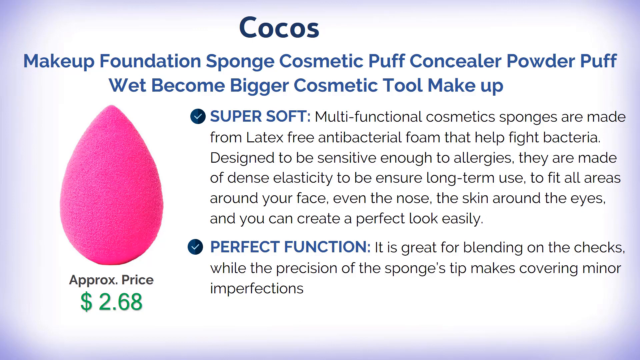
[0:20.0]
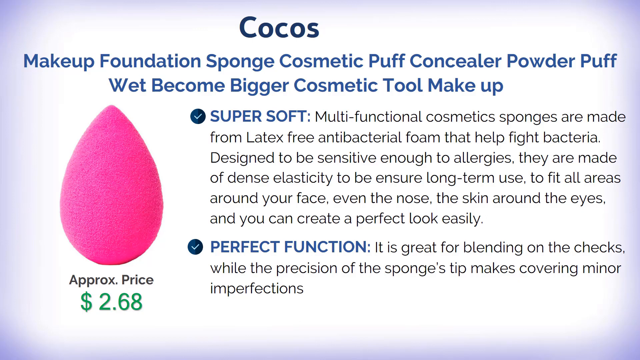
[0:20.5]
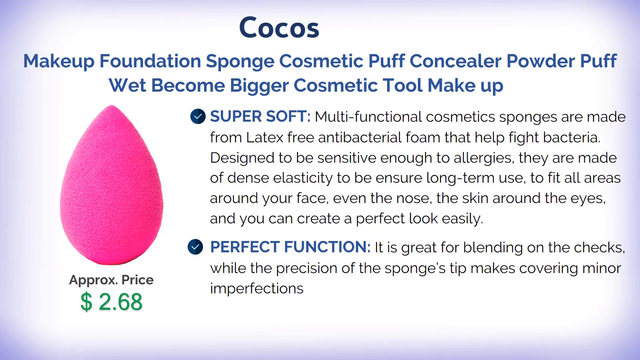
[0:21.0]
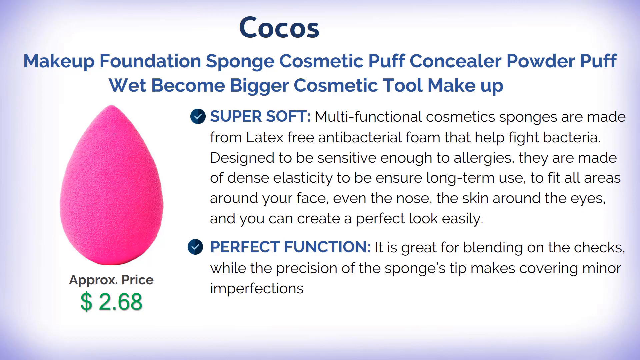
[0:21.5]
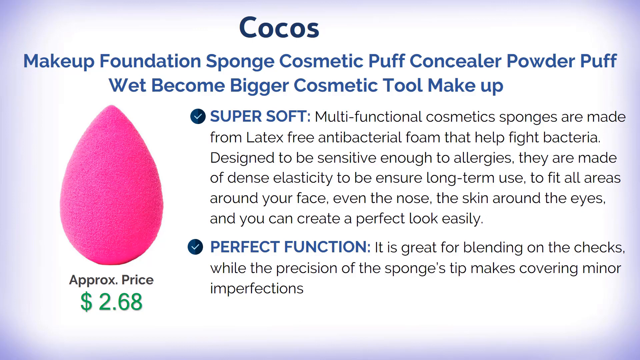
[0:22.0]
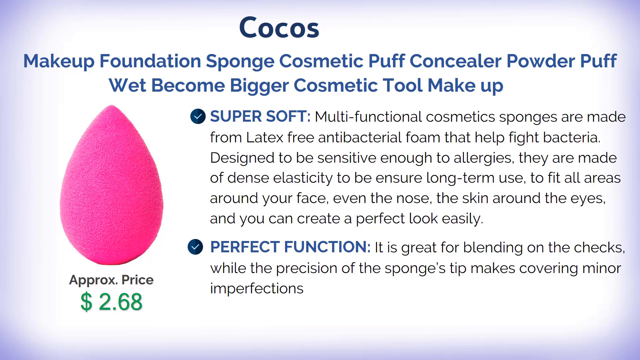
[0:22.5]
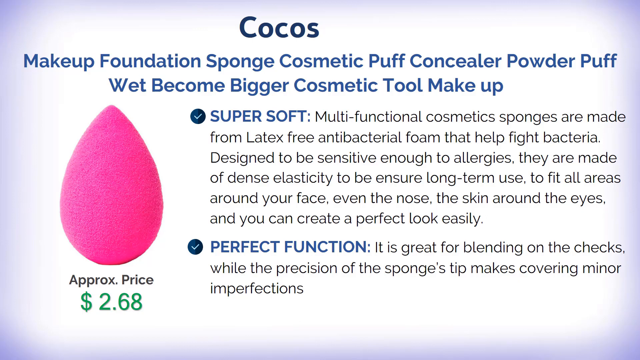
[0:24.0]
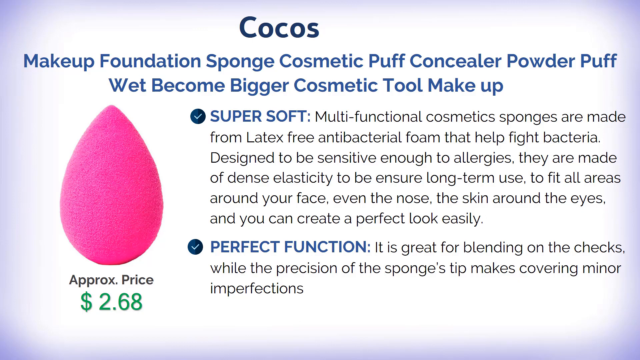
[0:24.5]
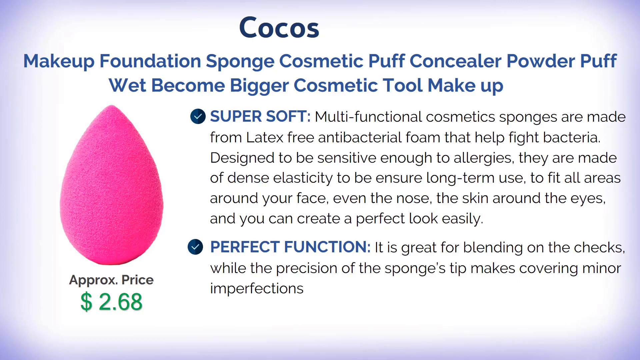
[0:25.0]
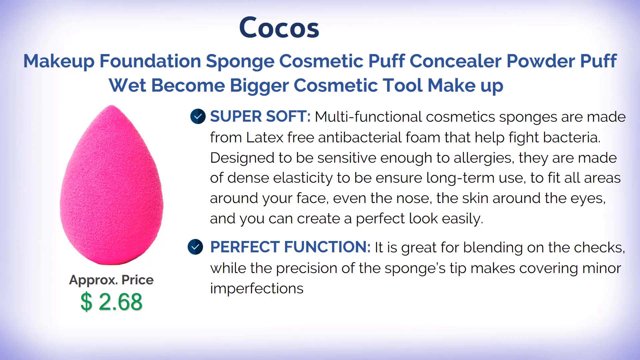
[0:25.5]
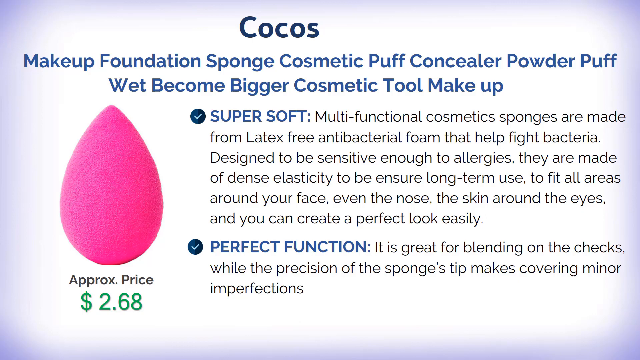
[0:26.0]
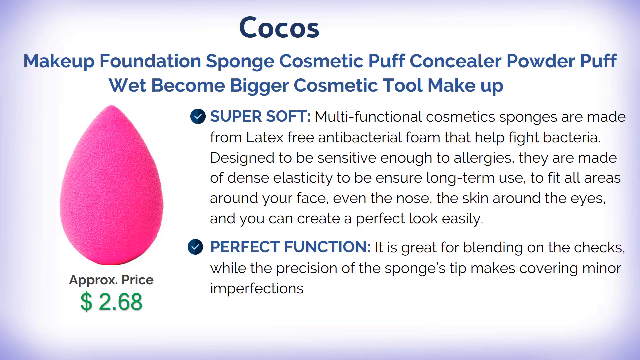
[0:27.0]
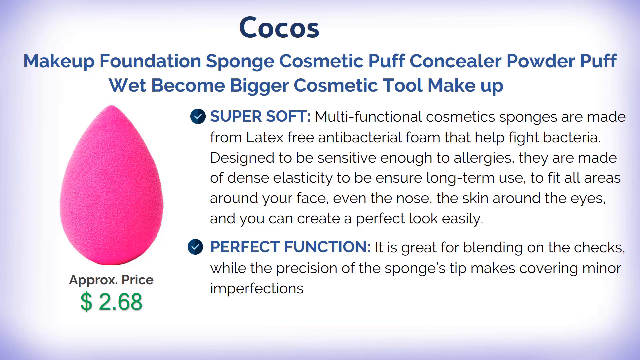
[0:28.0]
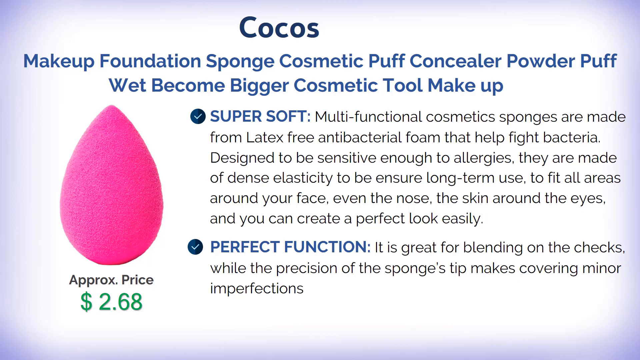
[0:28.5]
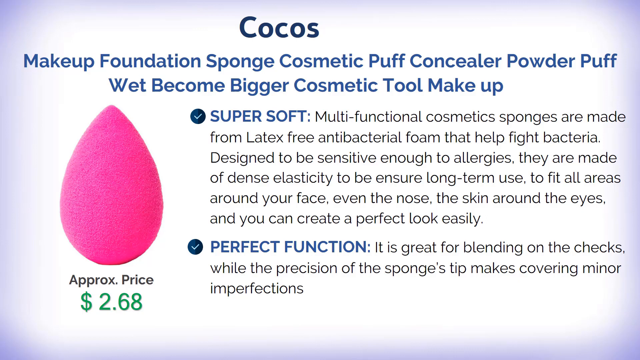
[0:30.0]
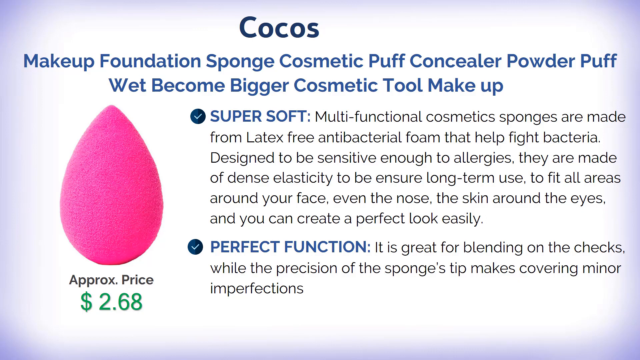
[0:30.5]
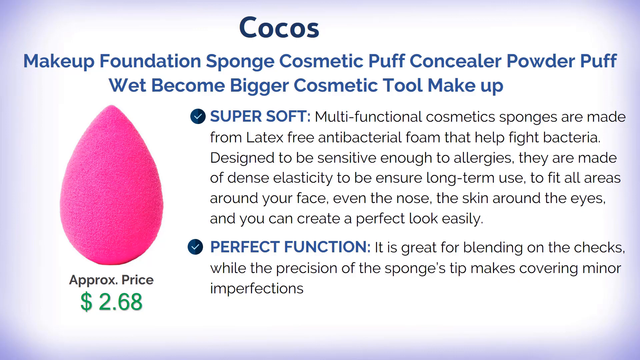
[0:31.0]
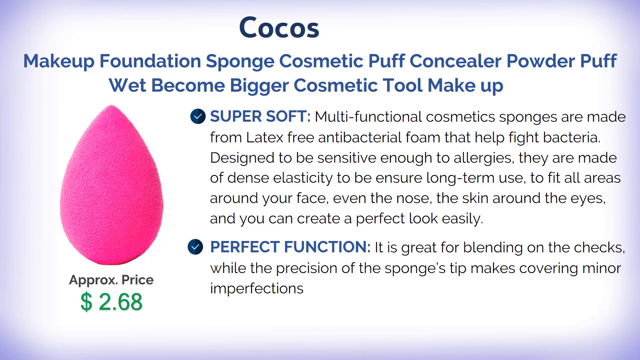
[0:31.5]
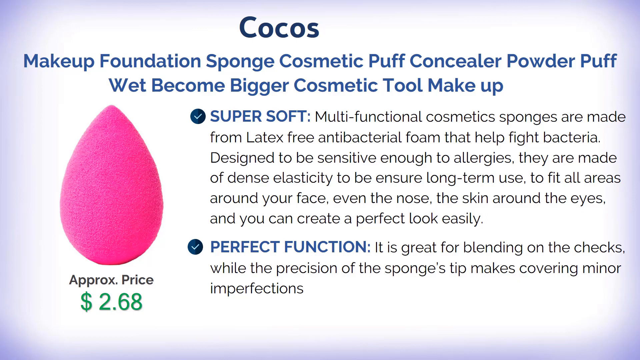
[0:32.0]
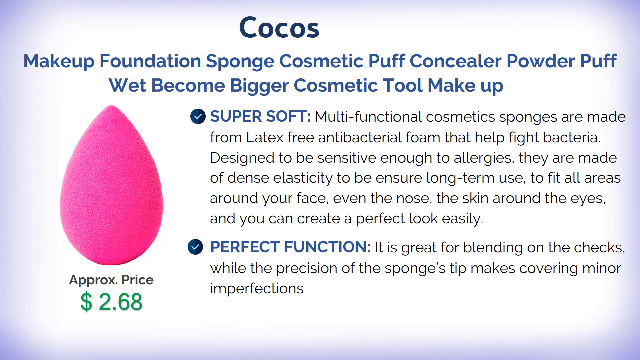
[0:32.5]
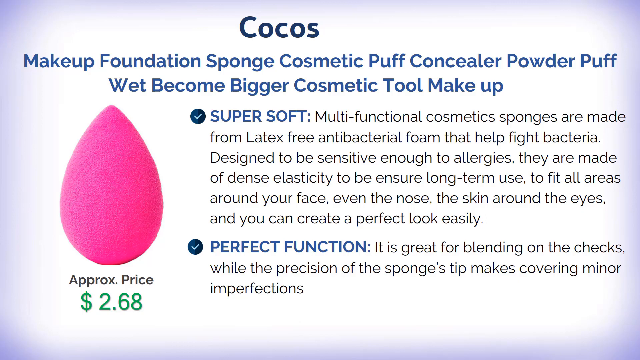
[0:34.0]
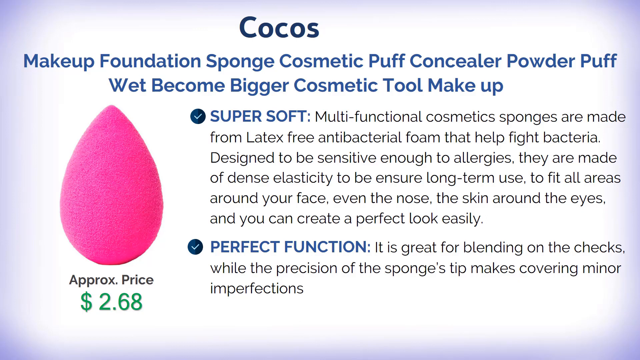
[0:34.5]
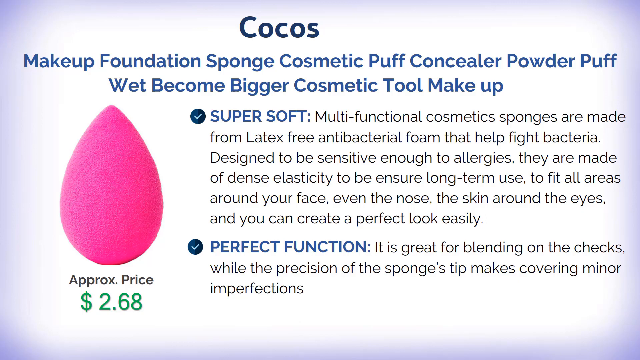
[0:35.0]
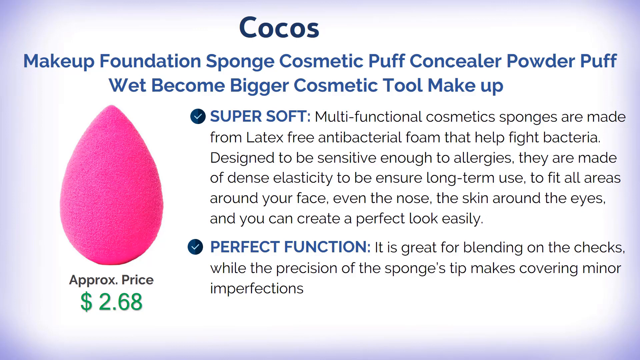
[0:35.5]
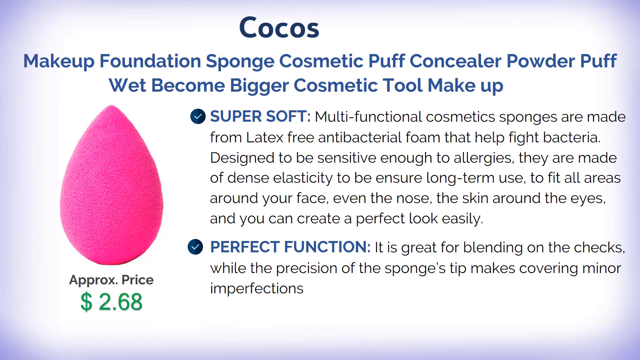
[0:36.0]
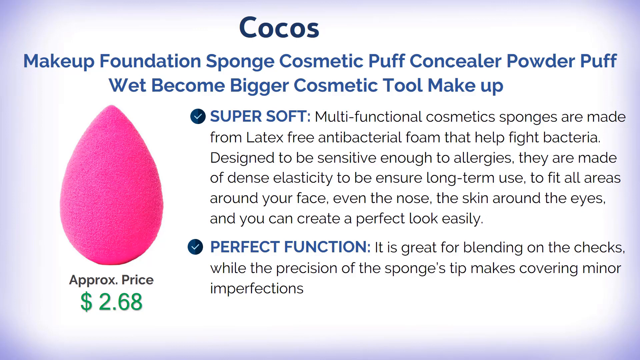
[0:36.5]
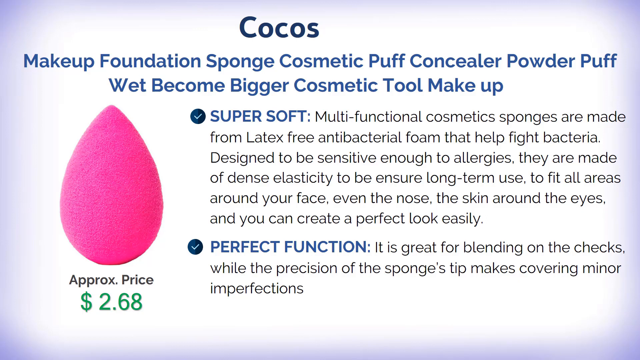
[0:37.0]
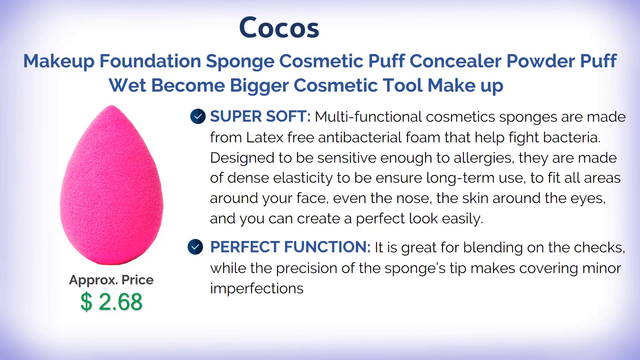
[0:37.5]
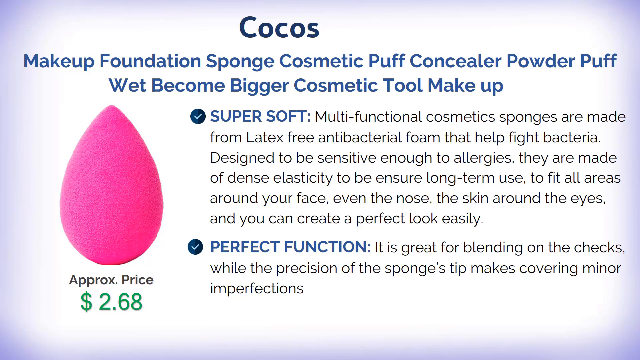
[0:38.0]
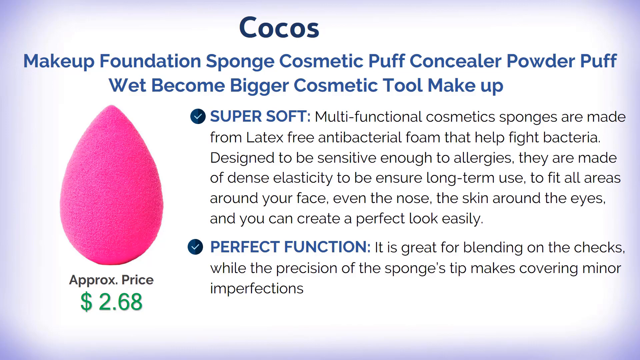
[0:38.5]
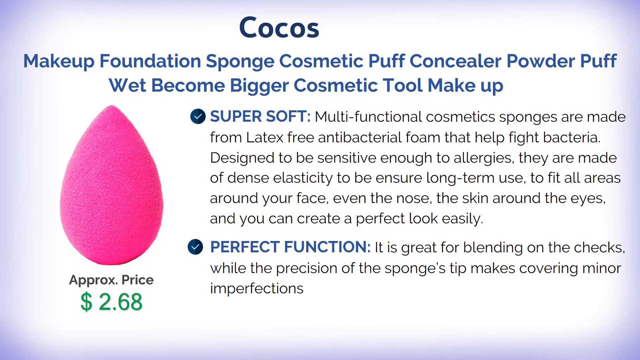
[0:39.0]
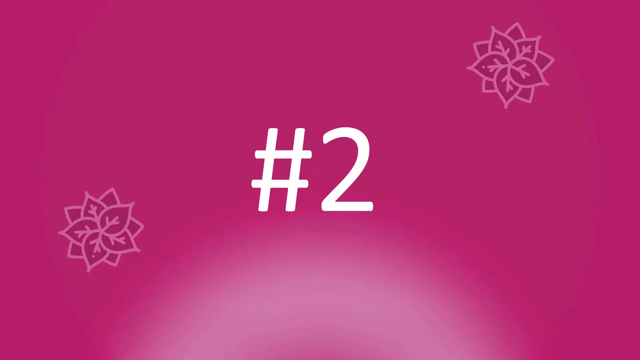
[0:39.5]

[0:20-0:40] A white background is covered with text. At the very top middle, dark blue text reads "COCOS". Below that, in a lighter, regular blue, text reads "Makeup Foundation Sponge, Cosmetic Puff Concealer, Powder Puff, Wet. Becomes Bigger Cosmetic Tool Makeup". Below that, blue text reads "Super Soft:", followed by black text reading "Multifunctional Cosmetics. Sponges are made from latex-free antibacterial foam that help fight bacteria. Designed to be sensitive enough to allergies, they are made of dense elasticity to ensure long-term use, to fit all areas around your face, even the nose, the skin around the eyes, and you can create a perfect look easily." Below that, blue text reads "perfect function:", followed by black text reading "it is great for blending on the cheeks, while the precision of the sponge's tip makes covering minor imperfections." On the left is a price in green numbers, "$2.68", with black text reading "approximate price" above it, and above that a picture of the product: a pink, teardrop-shaped object.